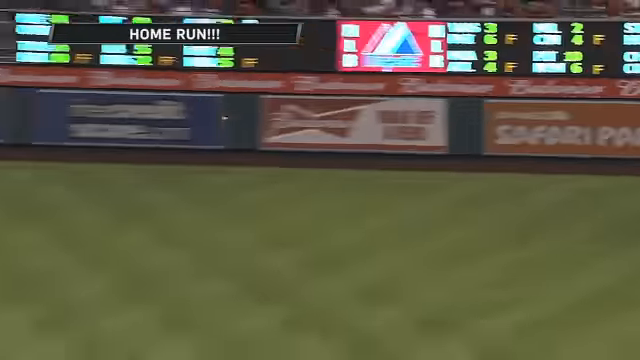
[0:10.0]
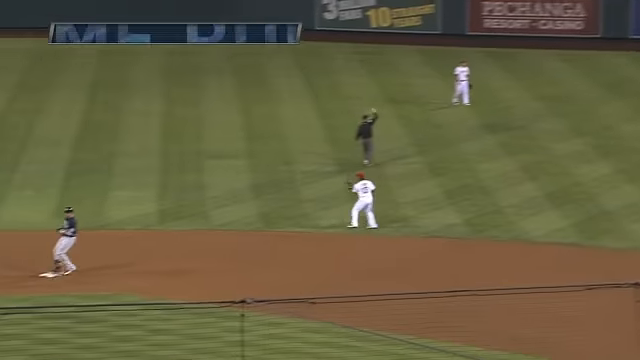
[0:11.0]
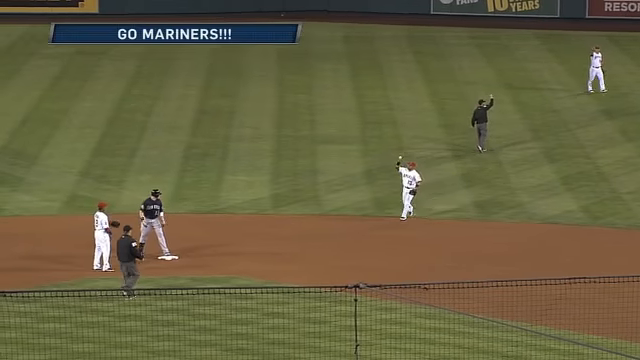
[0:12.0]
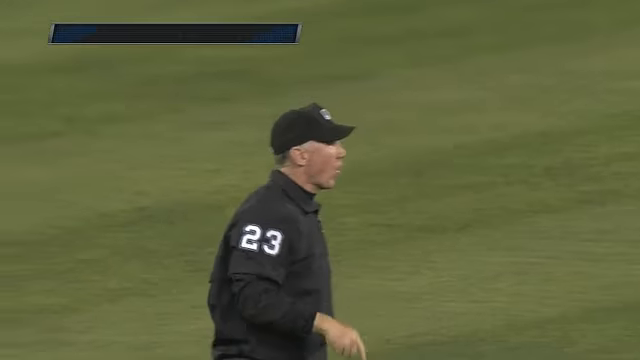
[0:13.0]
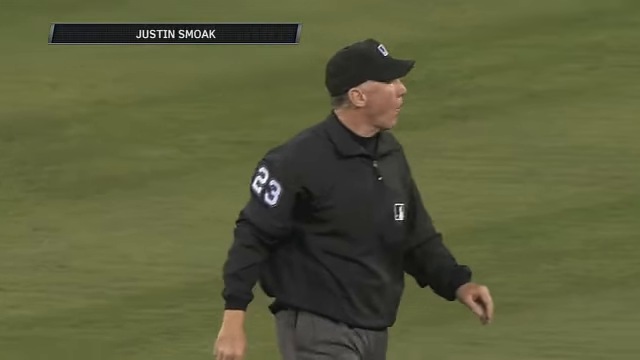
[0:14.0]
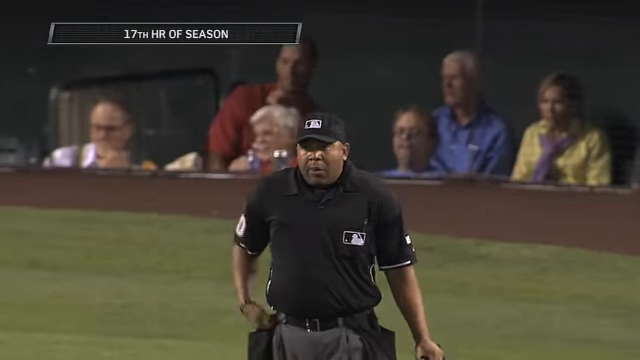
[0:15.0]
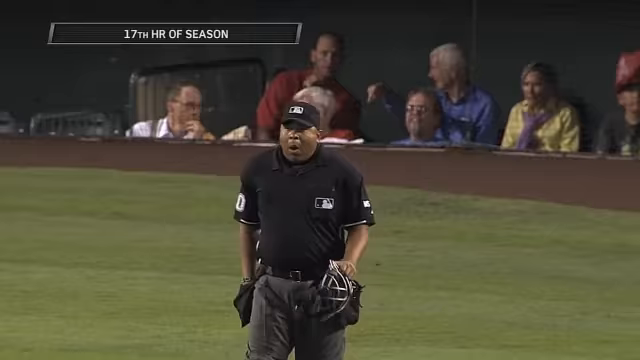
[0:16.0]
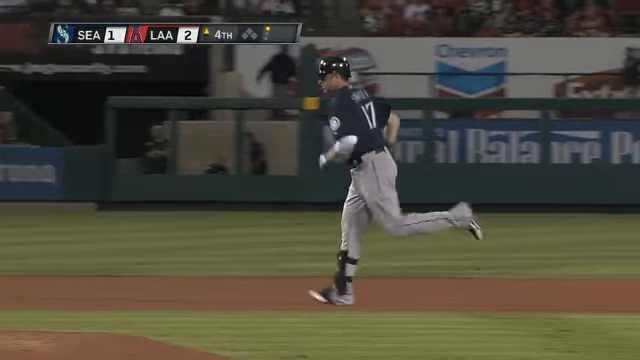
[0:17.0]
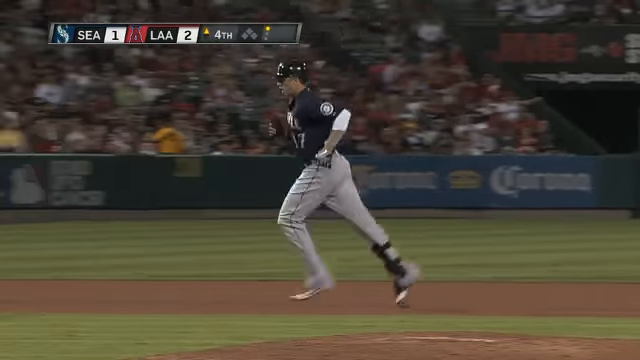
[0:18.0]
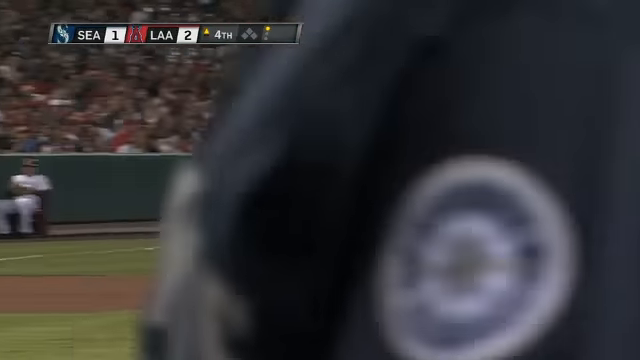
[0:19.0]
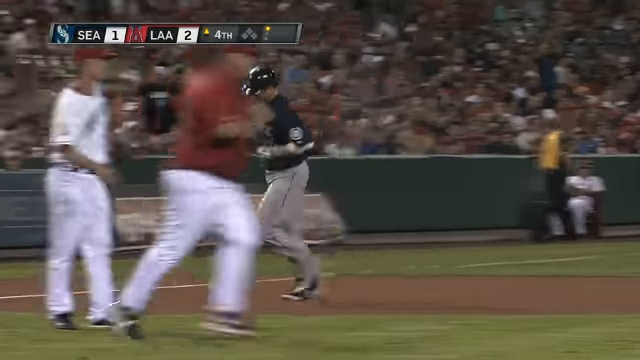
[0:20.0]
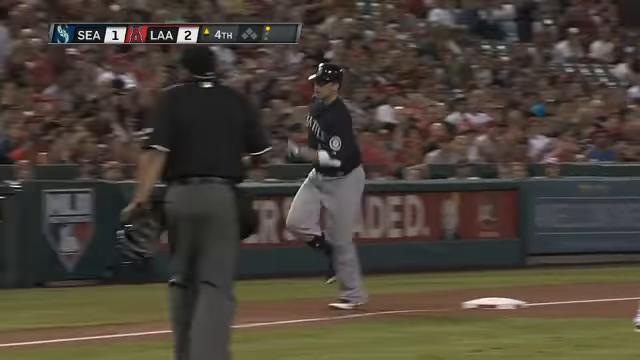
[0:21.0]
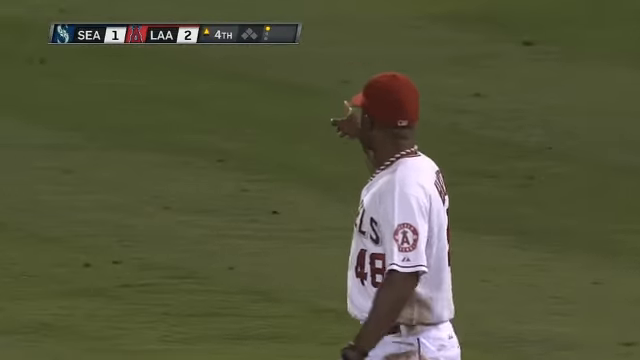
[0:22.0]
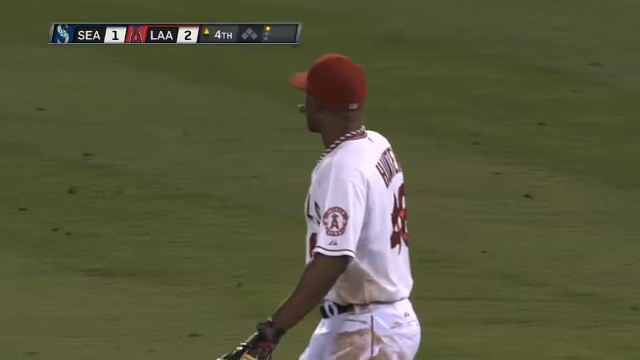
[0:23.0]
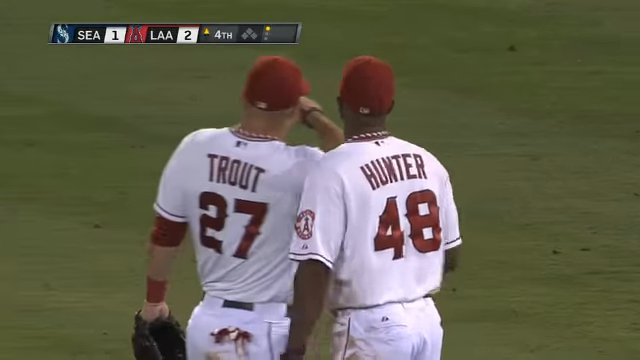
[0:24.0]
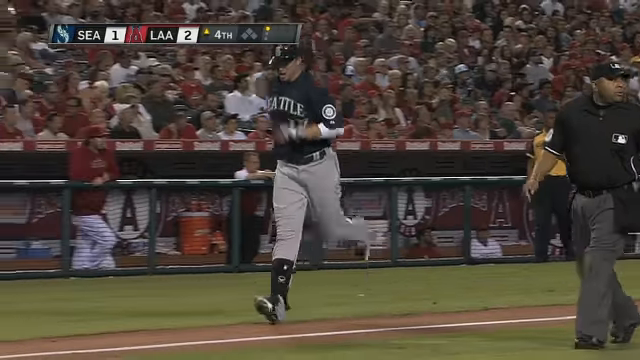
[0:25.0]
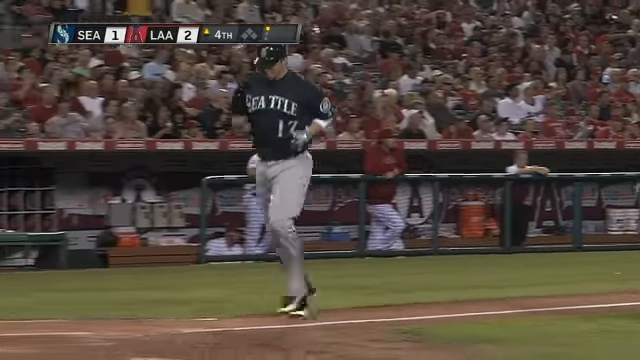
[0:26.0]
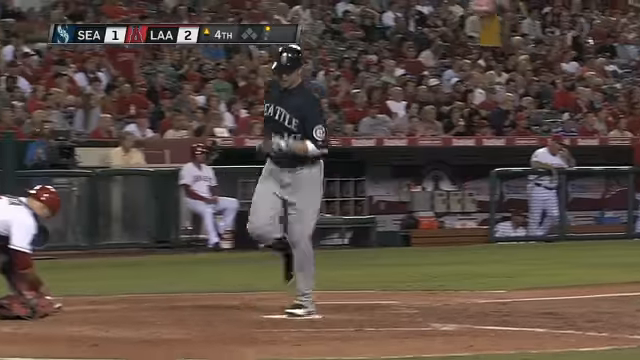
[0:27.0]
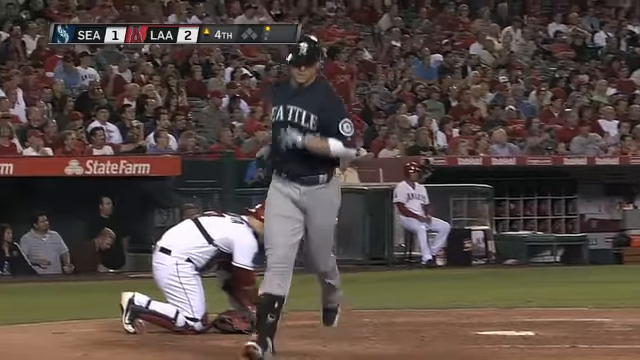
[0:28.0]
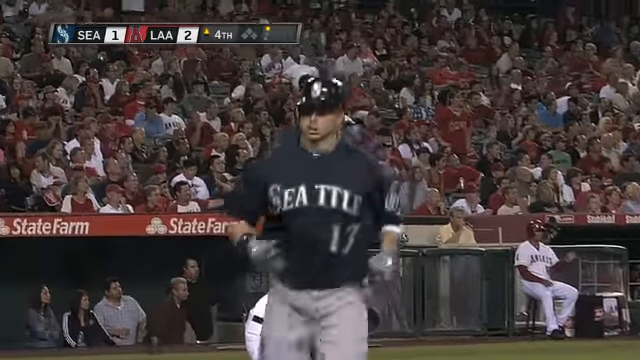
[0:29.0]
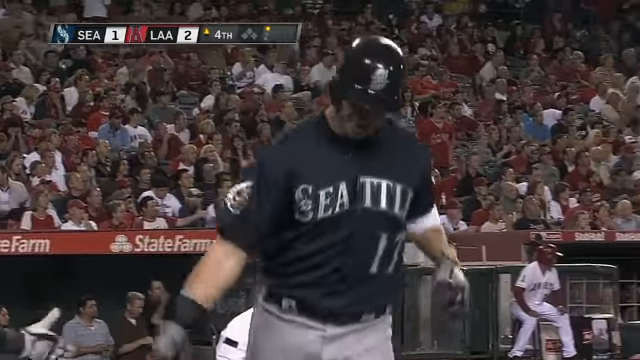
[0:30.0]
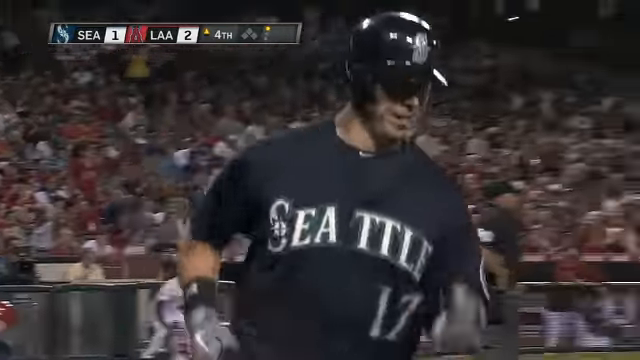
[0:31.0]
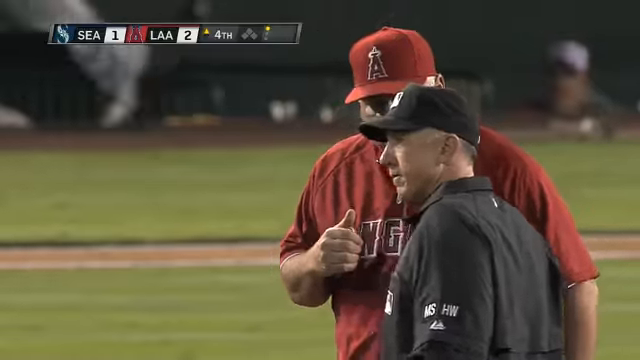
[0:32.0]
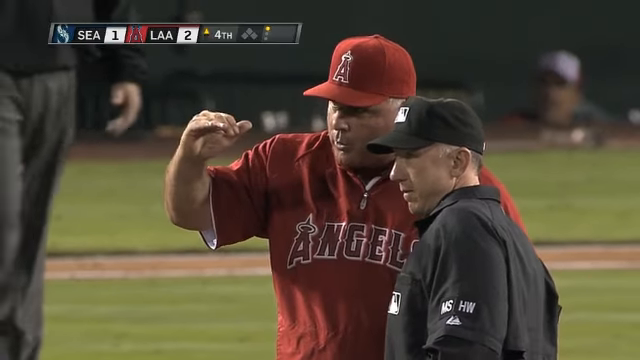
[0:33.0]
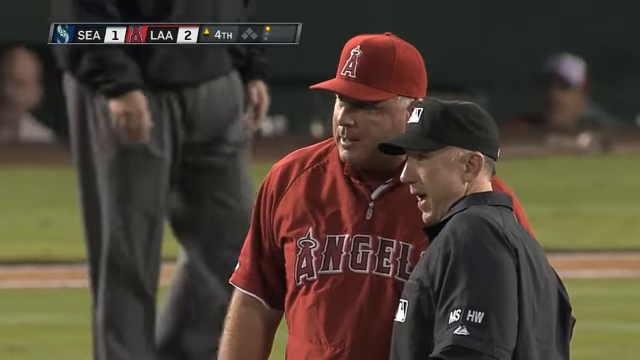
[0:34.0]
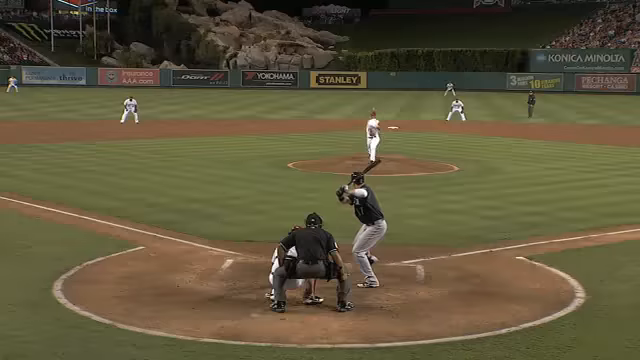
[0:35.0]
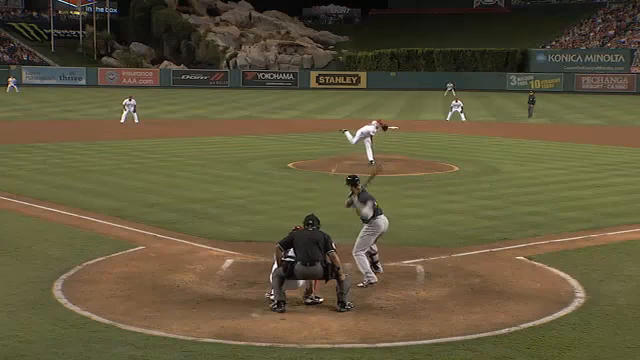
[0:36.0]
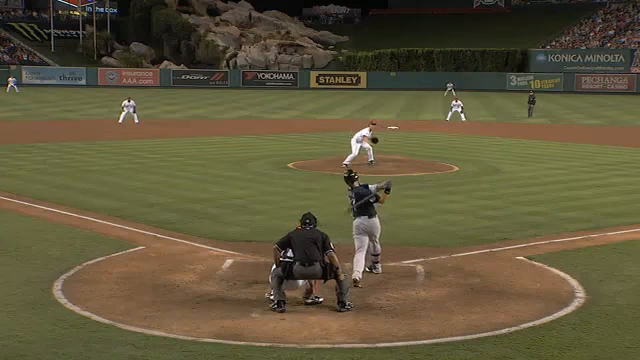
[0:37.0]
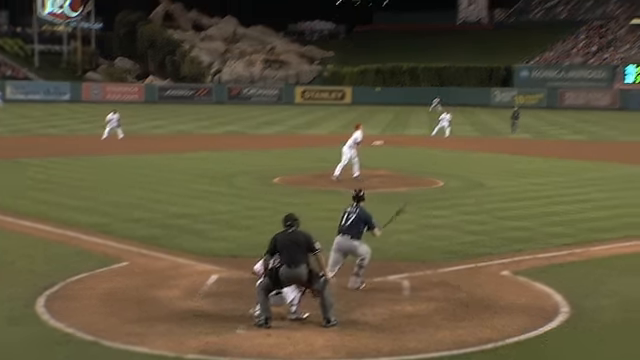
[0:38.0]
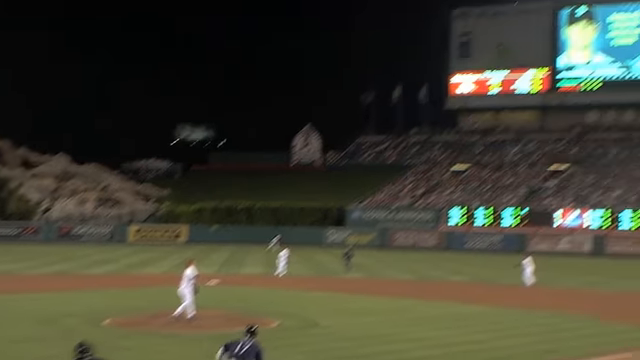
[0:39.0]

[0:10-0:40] The right fielder grabs the ball off the wall and throws it in to second base, but the umpire gives the home run sign, holding his pointer finger up and turning it in a circular manner. The home plate umpire does the same thing. The batter rounds third base and heads home. The Angels players are kind of gathering and pointing toward the outfield. The Seattle player touches home, crosses, and heads toward the dugout, low-fiving a teammate. One of the Angels coaches is out talking to one of the umpires, and they are kind of looking out toward right field. The coach has his arm or hand up toward his head area, almost parallel to the ground, as they speak. A slow-motion replay follows from behind home plate, showing the pitch coming in, the swing, and the ball going out toward right field.